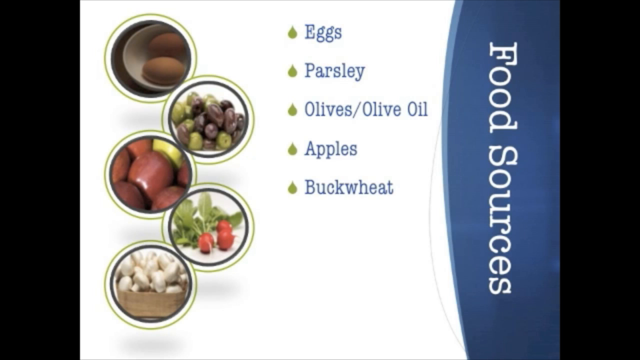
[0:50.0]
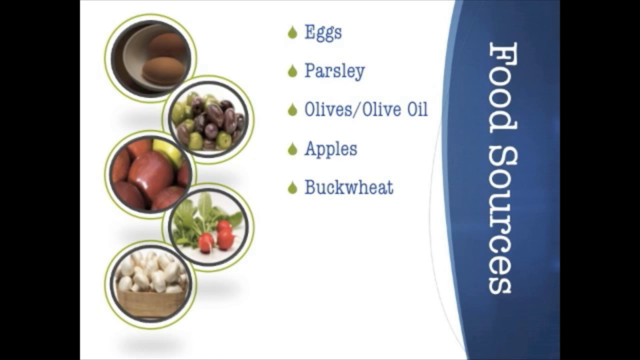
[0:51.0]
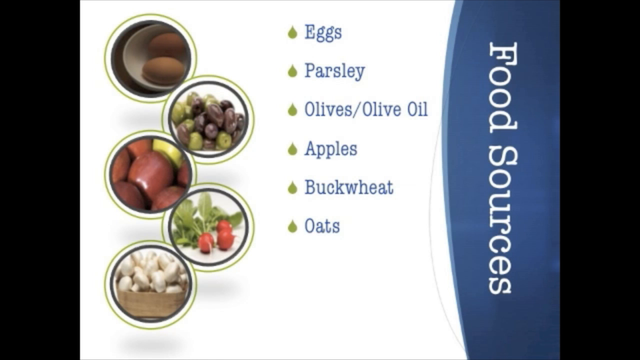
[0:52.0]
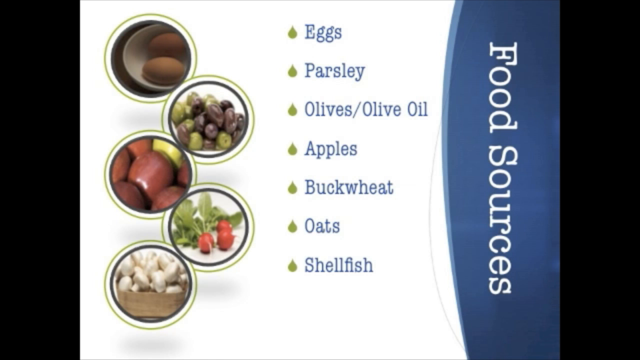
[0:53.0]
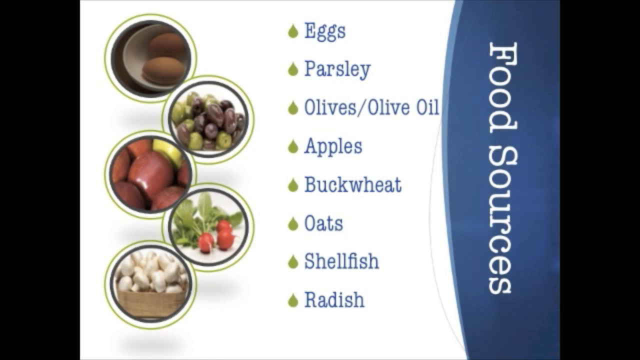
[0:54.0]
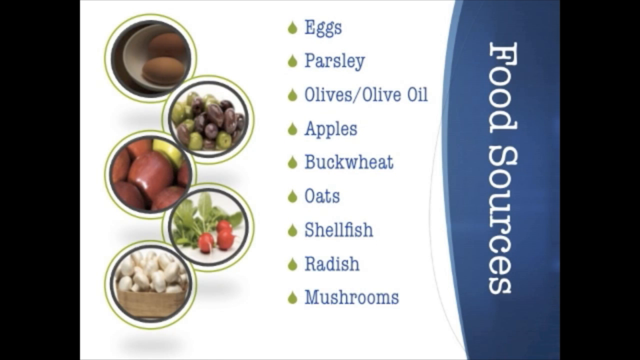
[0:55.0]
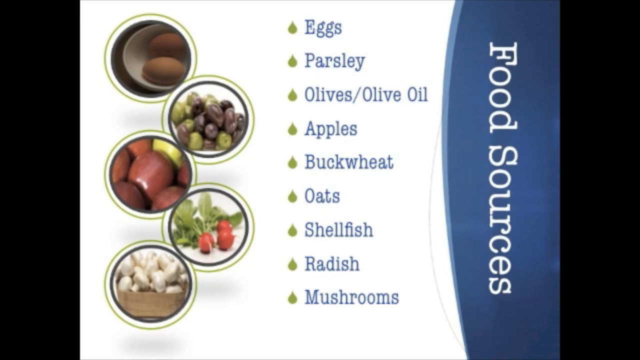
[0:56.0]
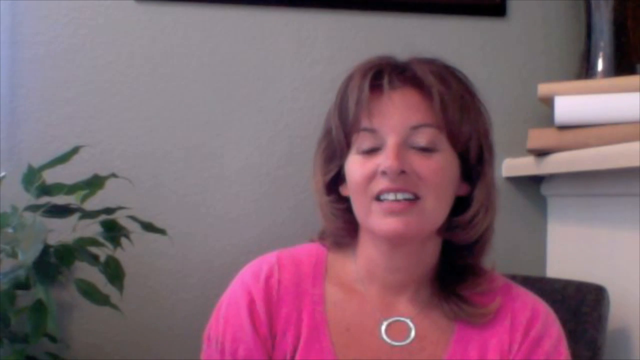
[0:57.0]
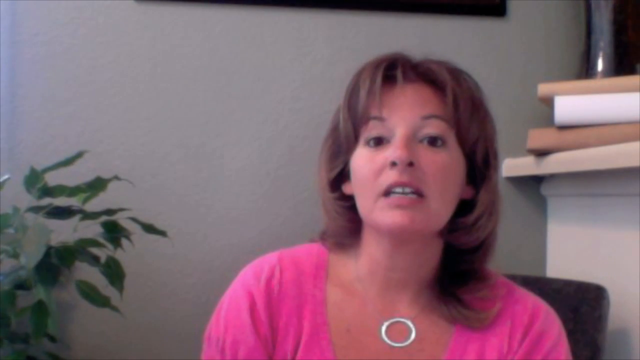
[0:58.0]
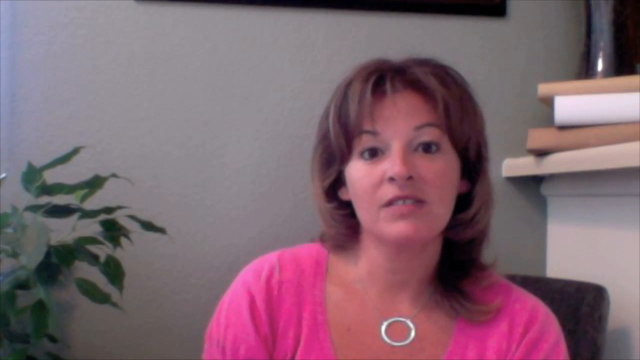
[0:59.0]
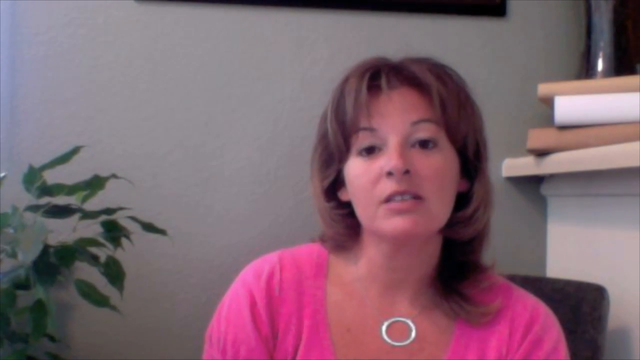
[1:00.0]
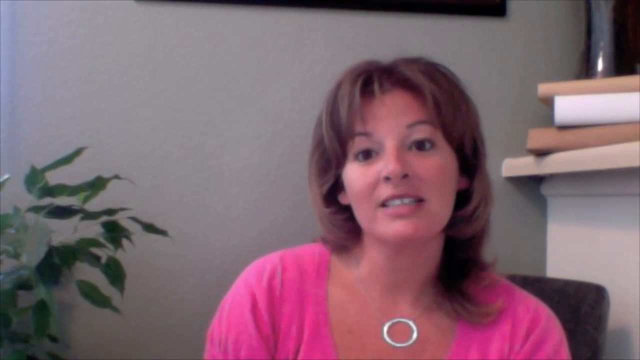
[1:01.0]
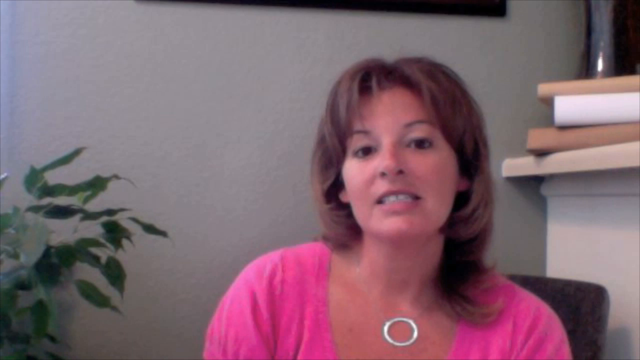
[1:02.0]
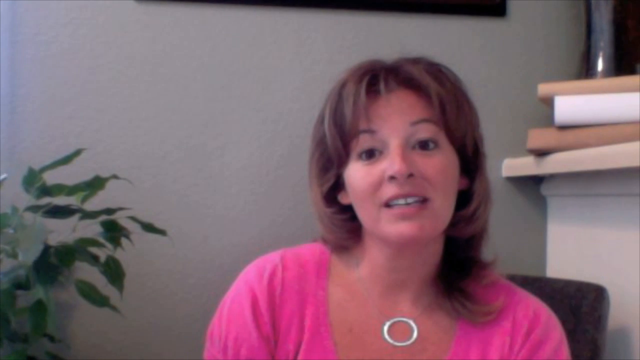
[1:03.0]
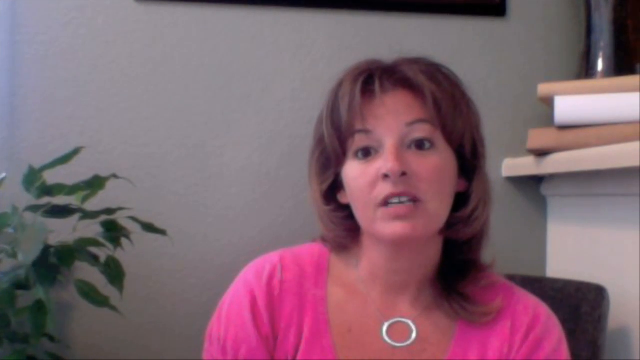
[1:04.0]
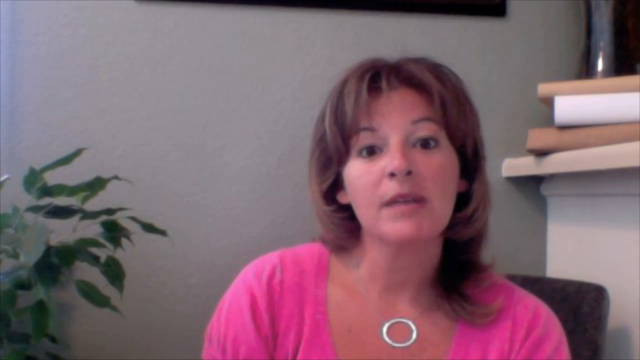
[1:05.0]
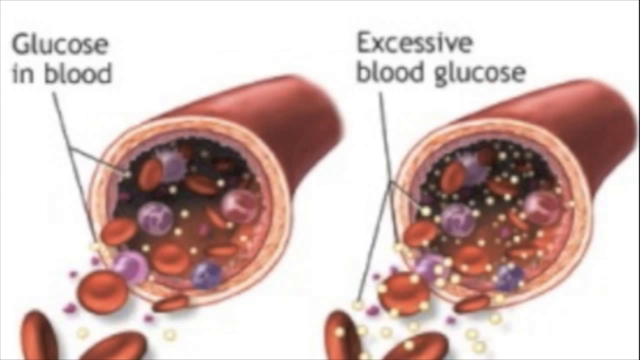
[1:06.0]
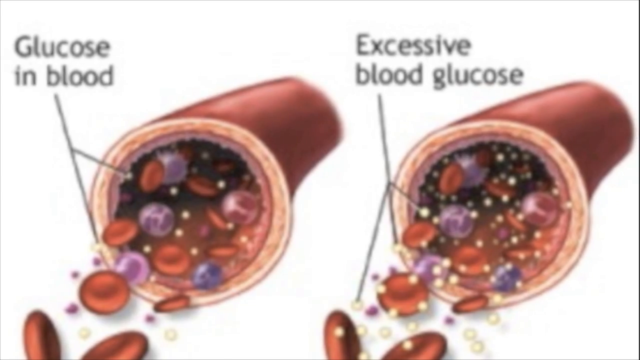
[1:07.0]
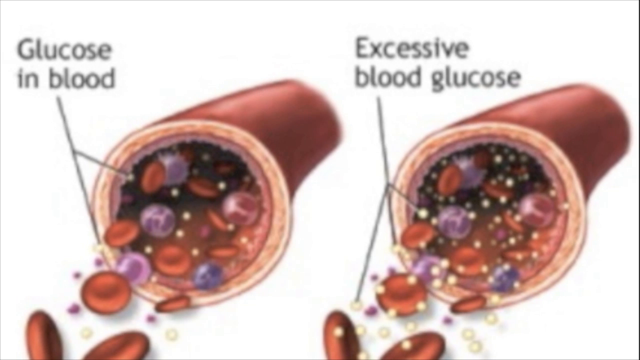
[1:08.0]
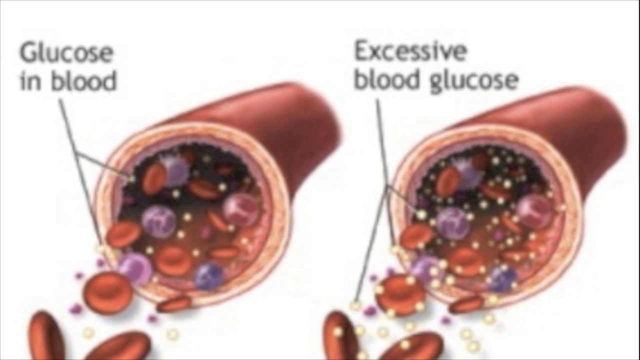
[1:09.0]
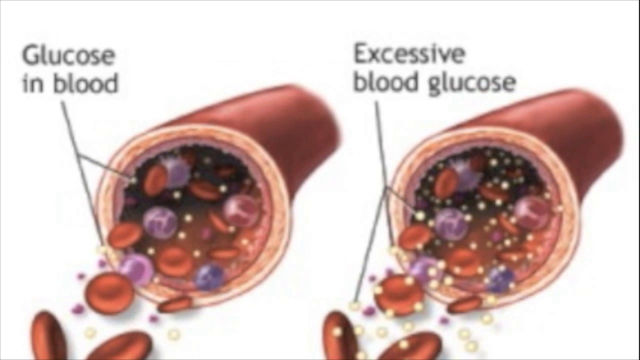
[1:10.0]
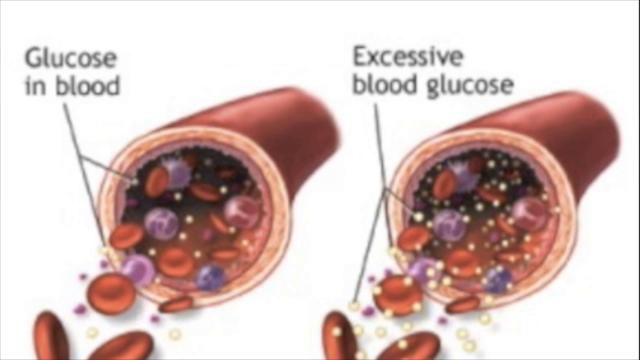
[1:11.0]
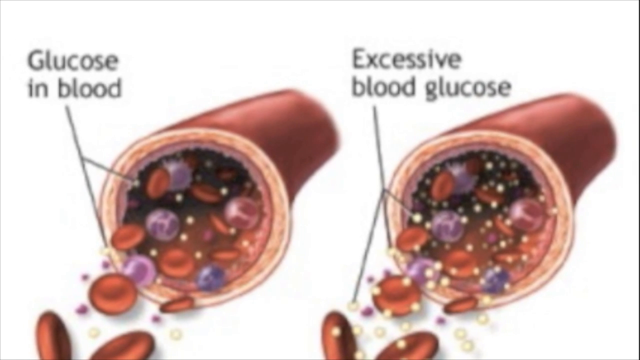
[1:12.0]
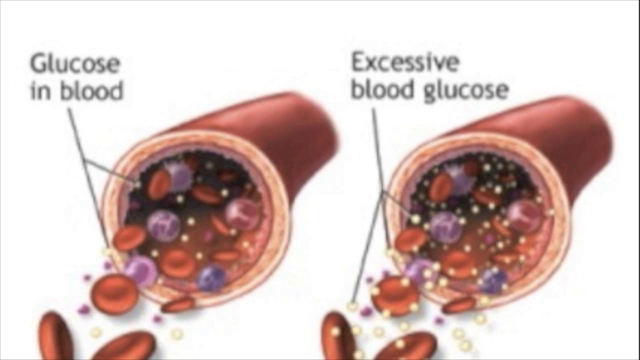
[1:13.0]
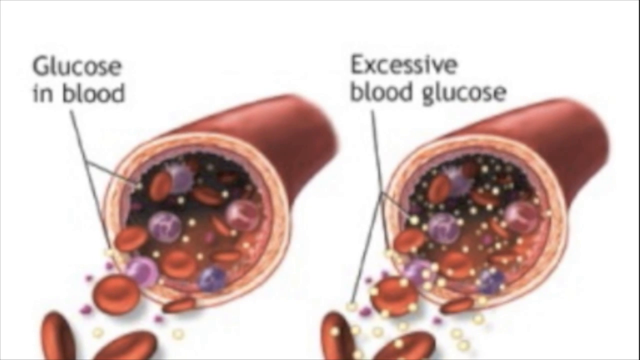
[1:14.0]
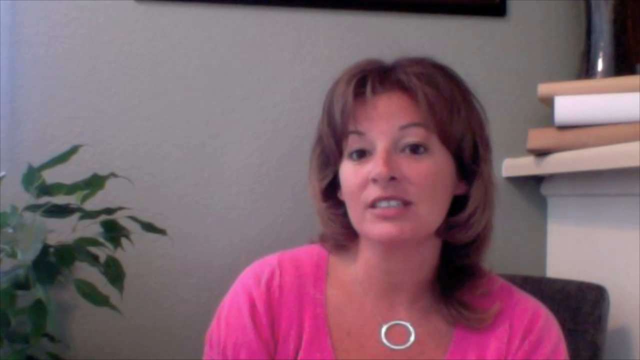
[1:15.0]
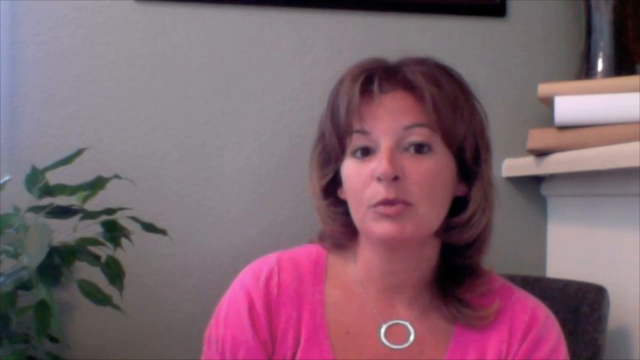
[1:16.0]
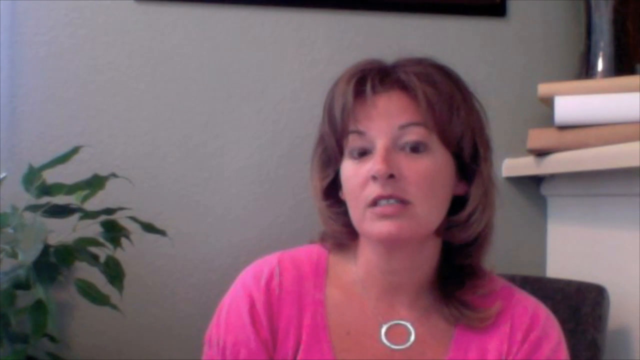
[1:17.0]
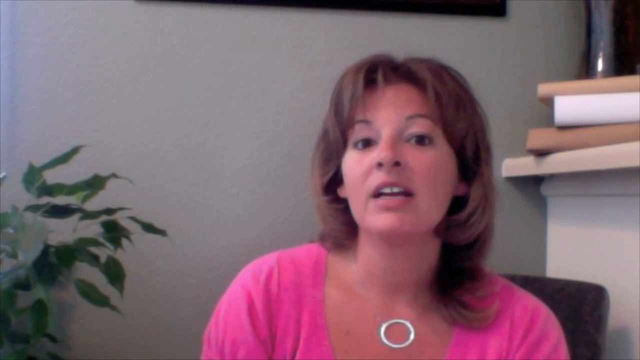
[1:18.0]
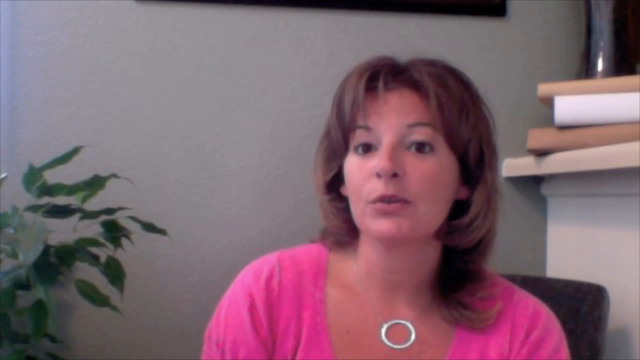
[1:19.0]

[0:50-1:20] The food slide continues. Eggs are pictured in a circle on the left, part of five circles offset in the shape of a sideways W or a backwards three: eggs, grapes, what look like olives, radishes and mushrooms. In the middle is what looks like a teardrop, and the food sources are listed: "eggs, parsley, olives, olive oil, apples, buckwheat, oats, shellfish, radishes." On the right-hand side, roughly a fourth of the screen bows into the white background behind the pictures and words; that fourth is blue, and on top of it is the text "food sources." It then returns to the woman, who has brown hair, a necklace with a circle on it and a pink shirt. She is sitting down, with a plant to her left that keeps moving, probably because of air movement. On the right is some sort of bookcase or mantle holding a couple of books: the mantle is white, with a tan book, a white book and a tan book, and possibly a vase behind them. A picture frame is behind her. She looks at the camera as she talks. Next comes a graphic with two pictures of a vein showing red blood cells and small white dots labeled as glucose in the blood. The left vein shows not much glucose, while the right picture shows many small dots labeled "excess blood glucose." It goes back to her talking, and the plant keeps wiggling.